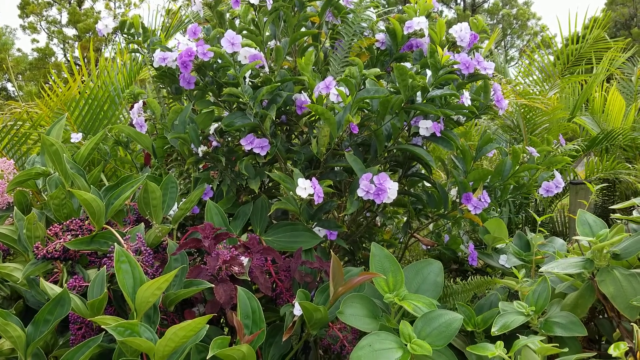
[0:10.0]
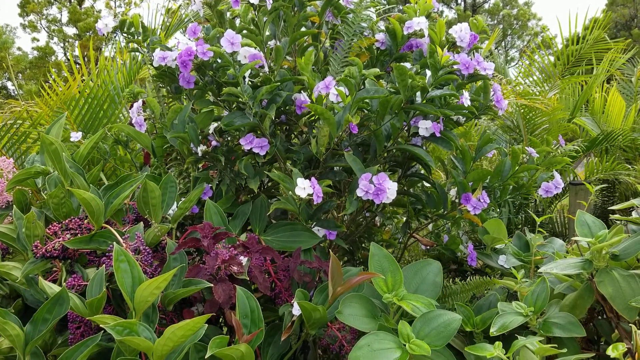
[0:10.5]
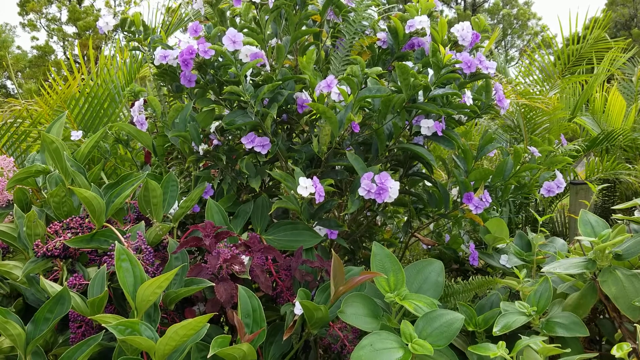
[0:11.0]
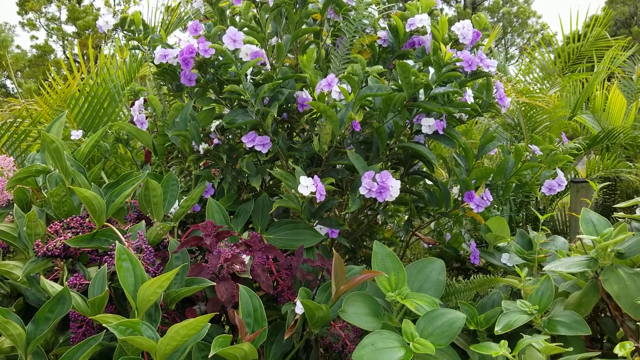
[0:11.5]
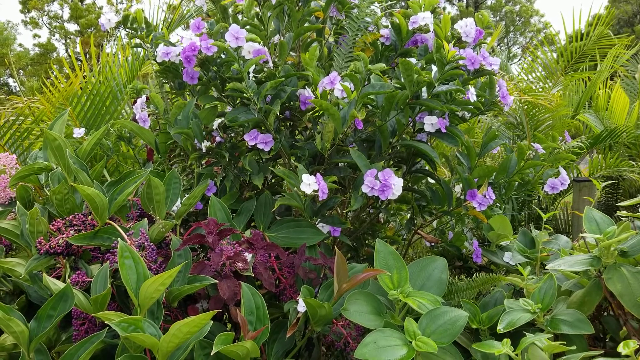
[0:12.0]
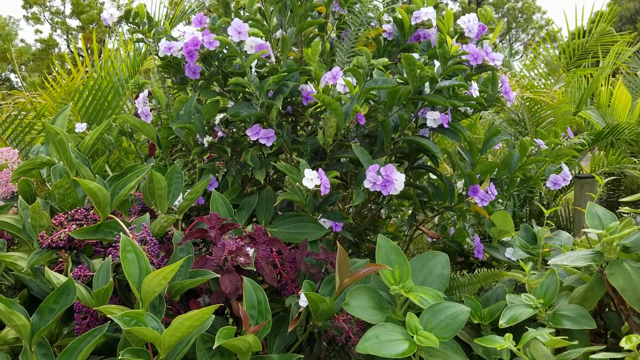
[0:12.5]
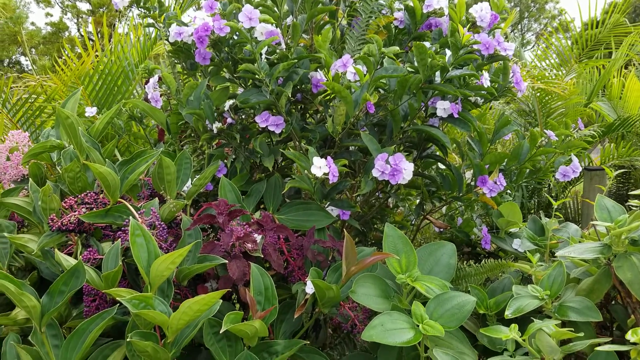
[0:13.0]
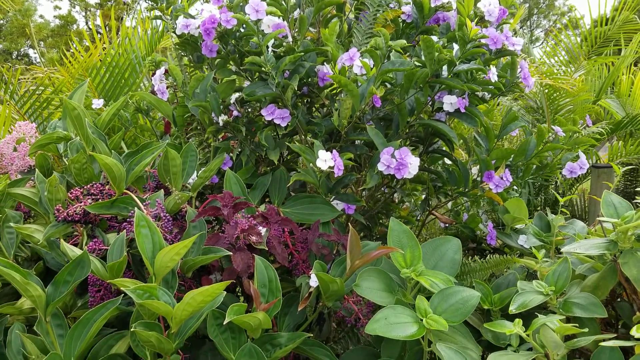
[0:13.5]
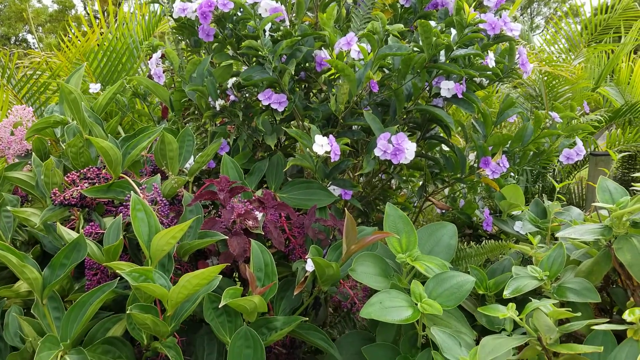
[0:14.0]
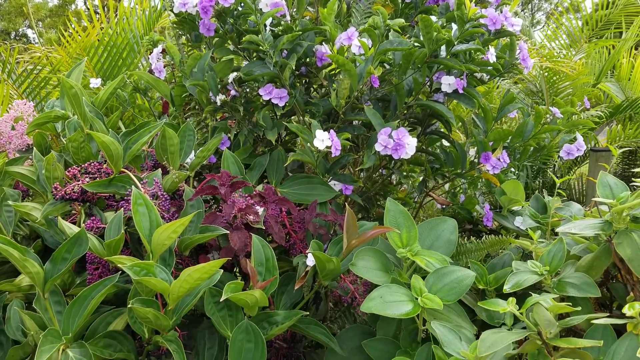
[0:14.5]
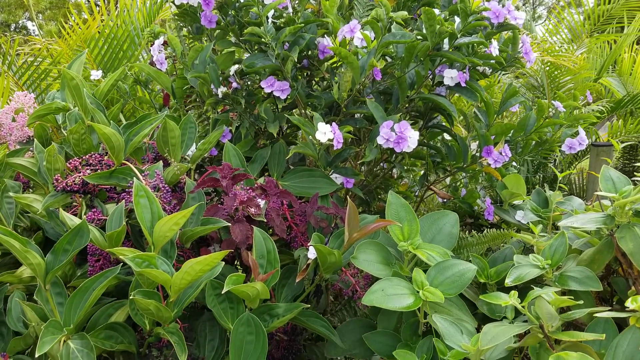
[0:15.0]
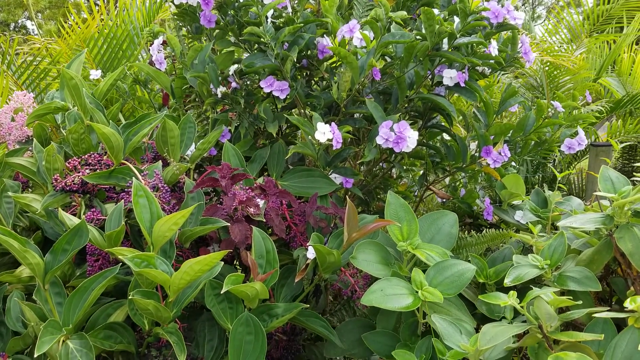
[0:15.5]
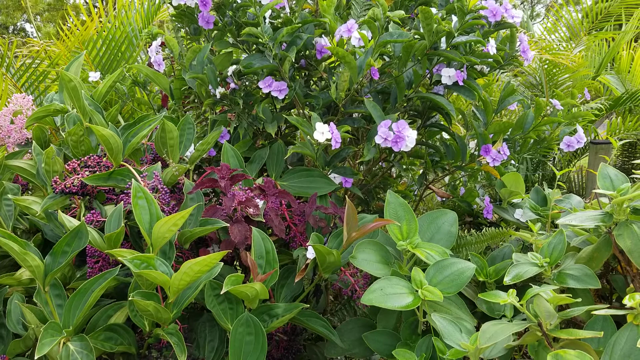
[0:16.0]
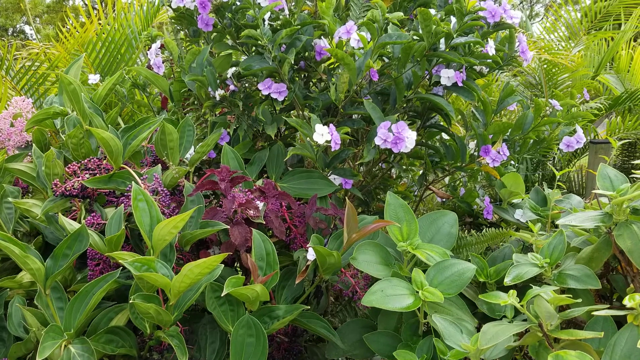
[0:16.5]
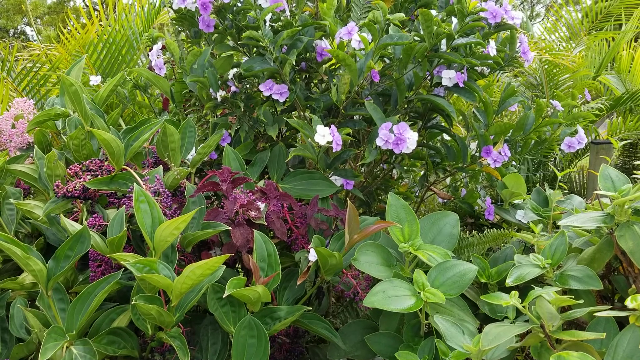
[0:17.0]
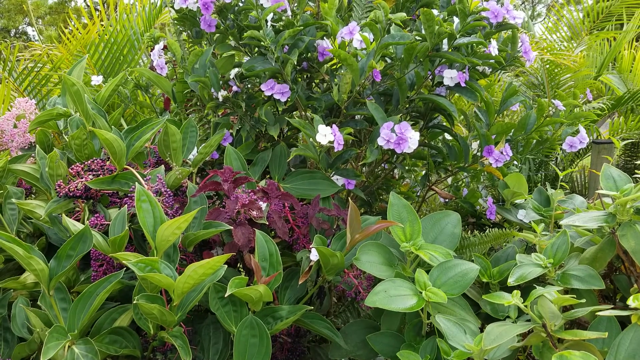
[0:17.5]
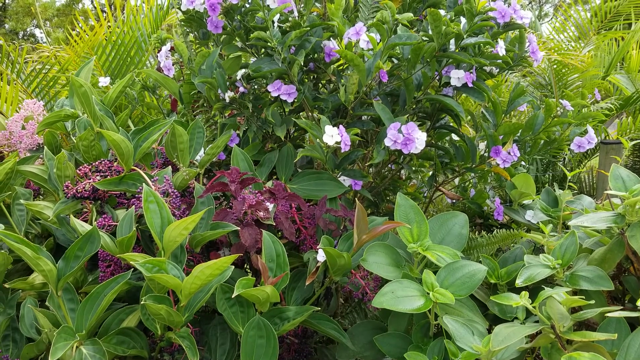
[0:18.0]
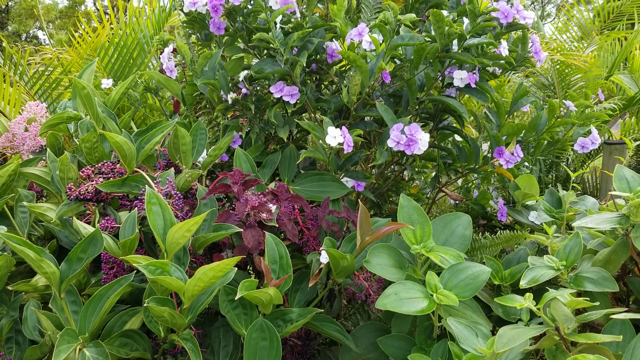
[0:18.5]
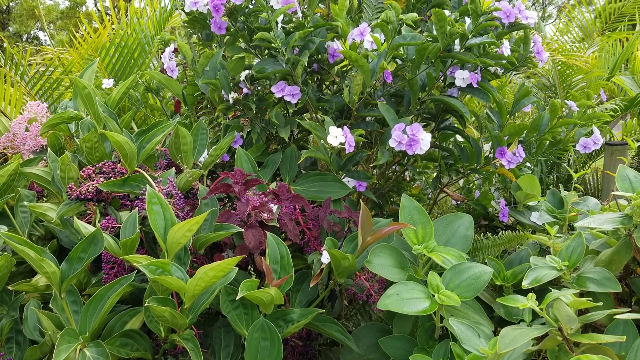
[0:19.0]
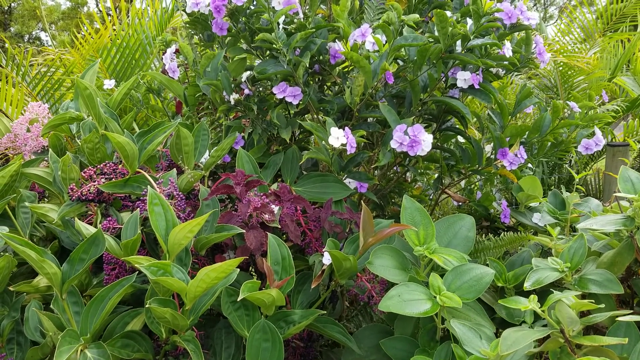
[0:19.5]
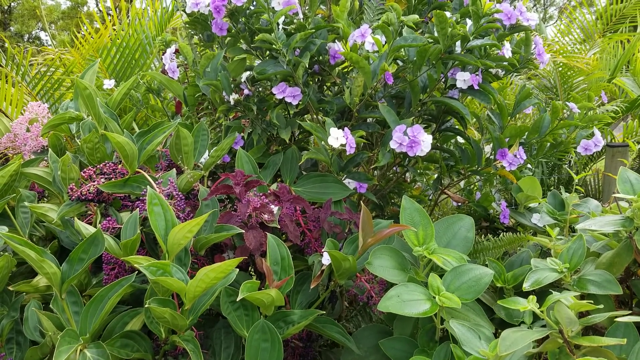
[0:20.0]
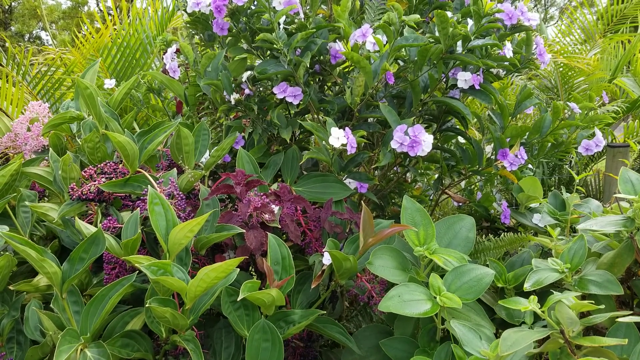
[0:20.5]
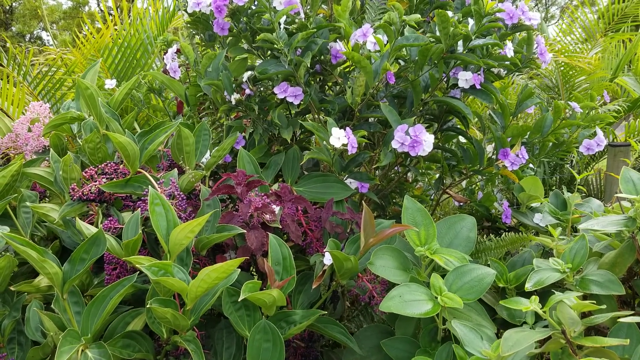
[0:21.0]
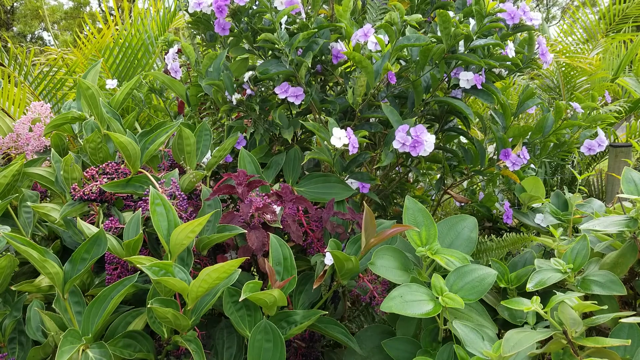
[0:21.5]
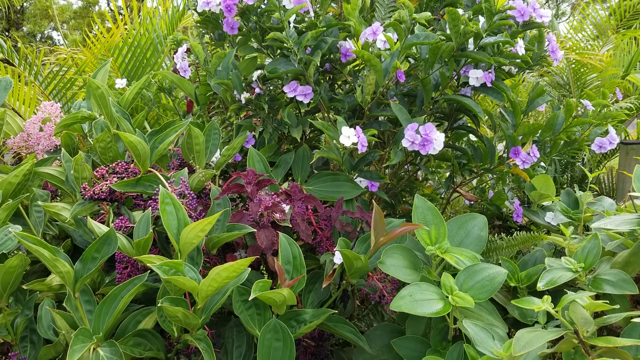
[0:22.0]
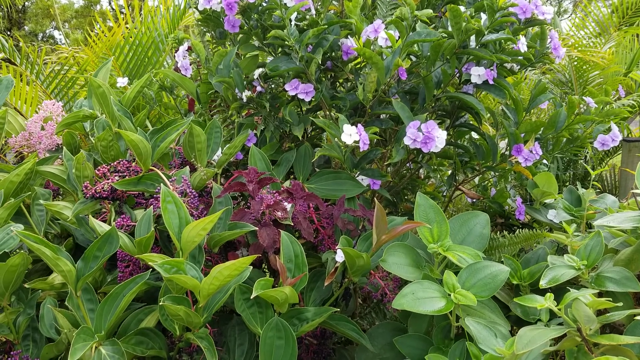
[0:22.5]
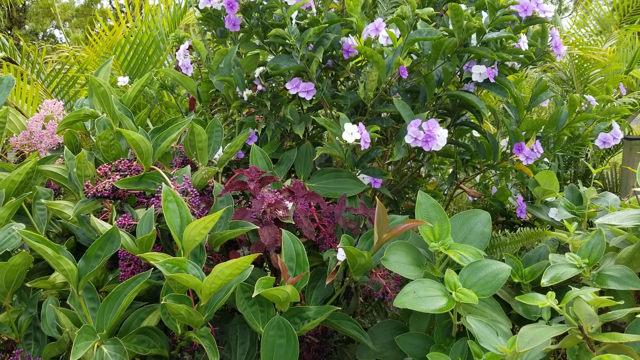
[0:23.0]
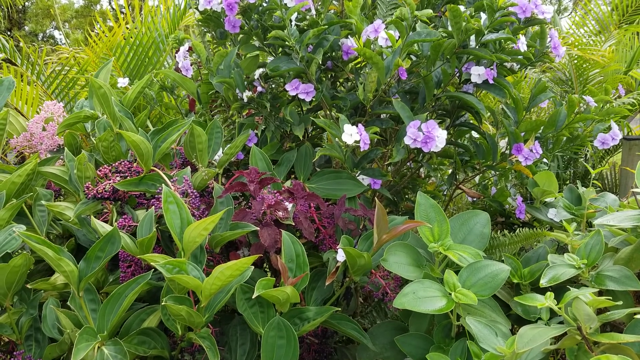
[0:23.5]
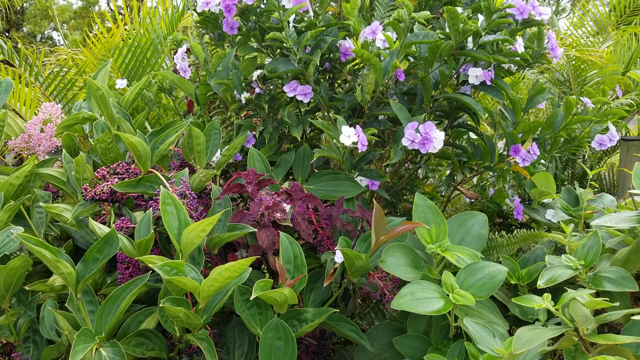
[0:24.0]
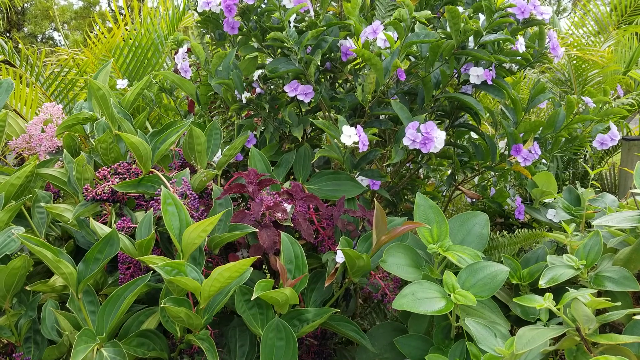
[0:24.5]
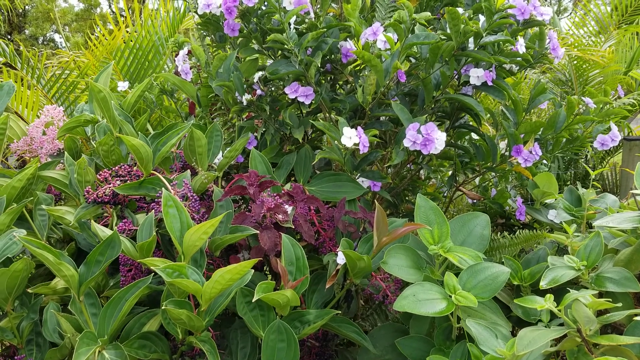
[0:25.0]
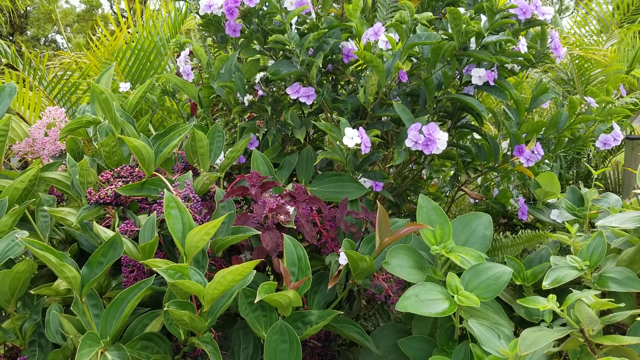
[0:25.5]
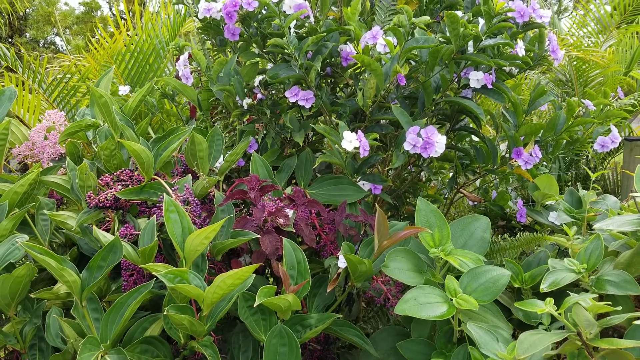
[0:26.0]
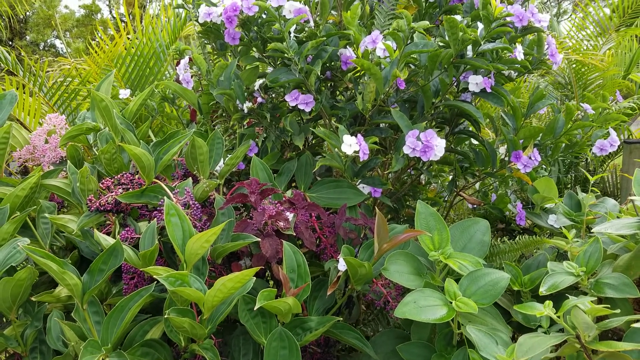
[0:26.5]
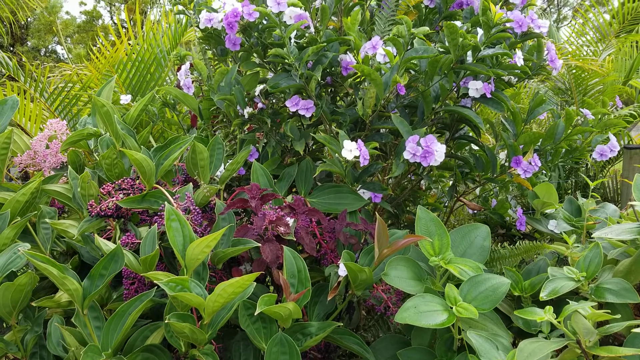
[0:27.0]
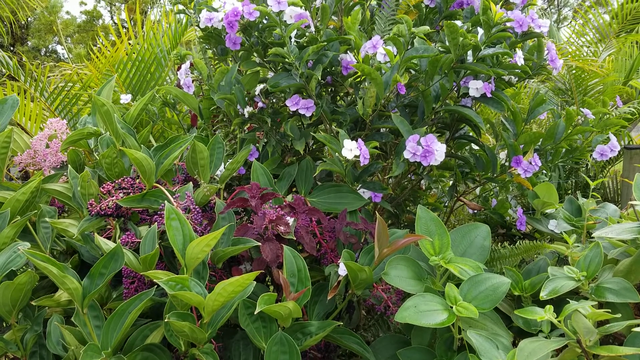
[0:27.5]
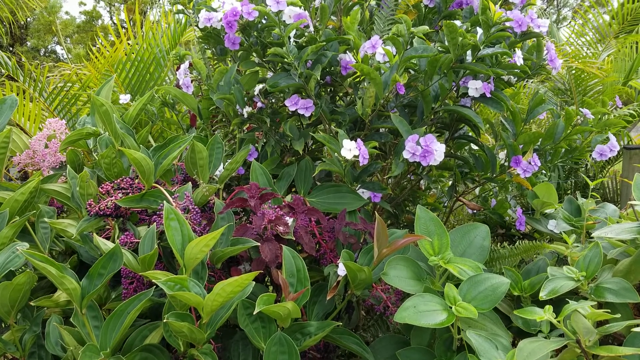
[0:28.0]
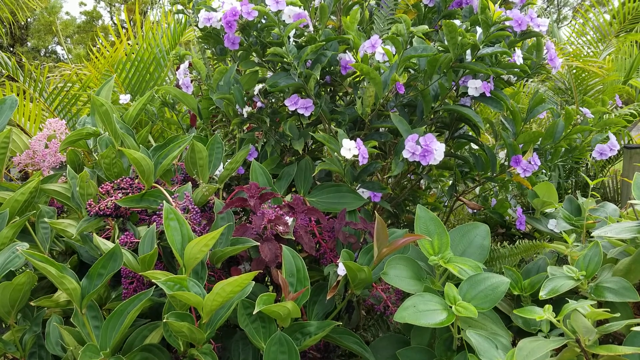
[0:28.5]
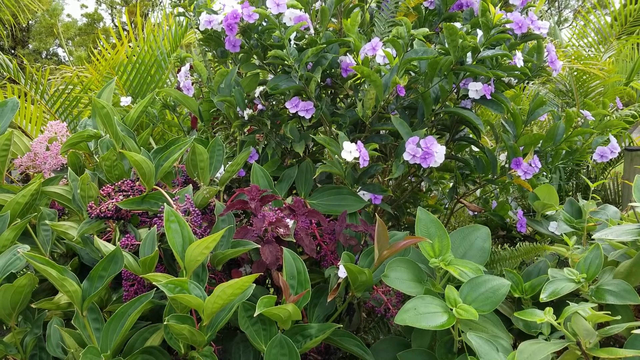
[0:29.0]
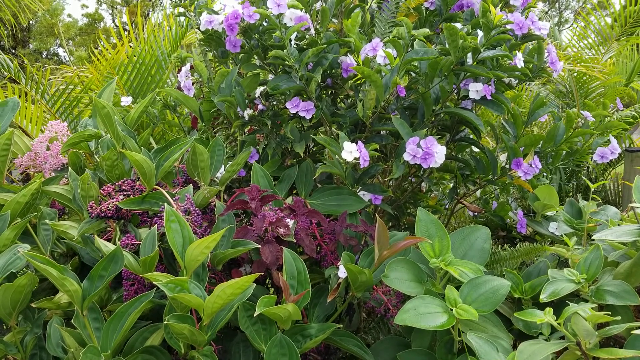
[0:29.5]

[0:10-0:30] The whole screen is filled with plants. A dark green bush has small white and light purple flowers on the tips of its branches, coming off each of the branches. Light green and dark green plants are planted around the bush; one has very long, skinny leaves that are very pointy at the tips. Behind it is a small tree, and past that are larger trees and some of the sky. In front of the bush, other leafy plants are on the ground; they don't grow up high, probably only about an inch or two tall, and they surround the bush with the purple flowers. There are also small maroon-colored plants, and a small bundle of pink flowers is to the left of the bush.